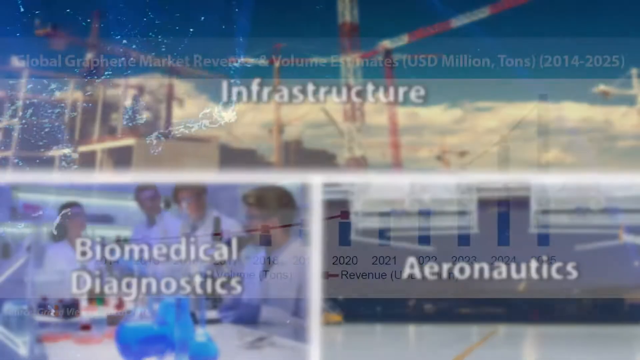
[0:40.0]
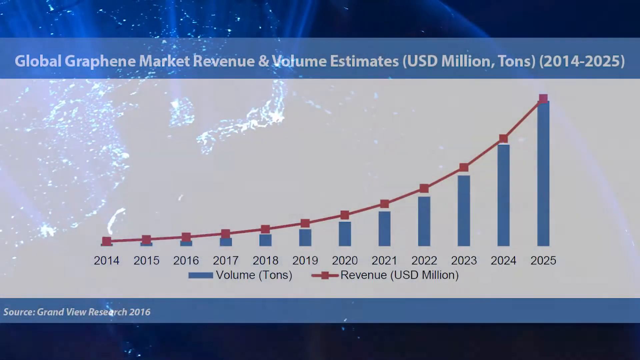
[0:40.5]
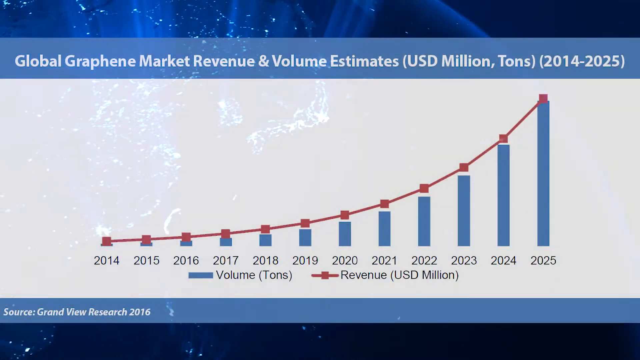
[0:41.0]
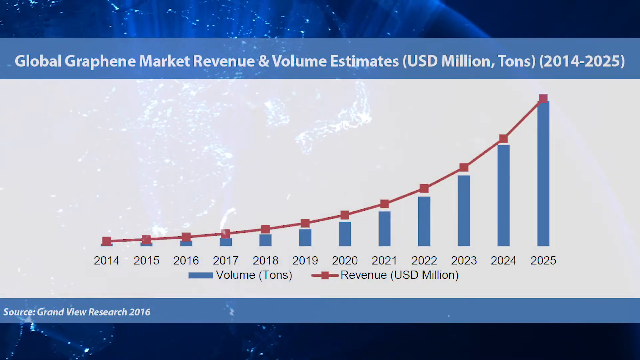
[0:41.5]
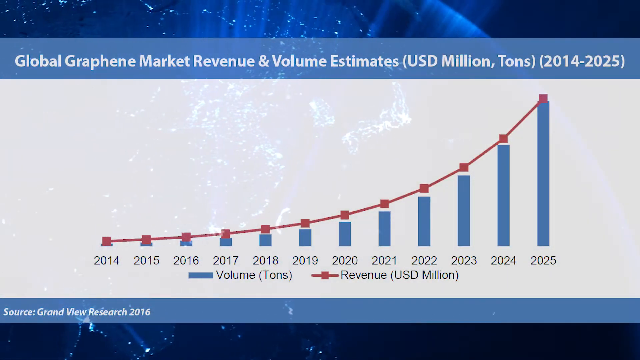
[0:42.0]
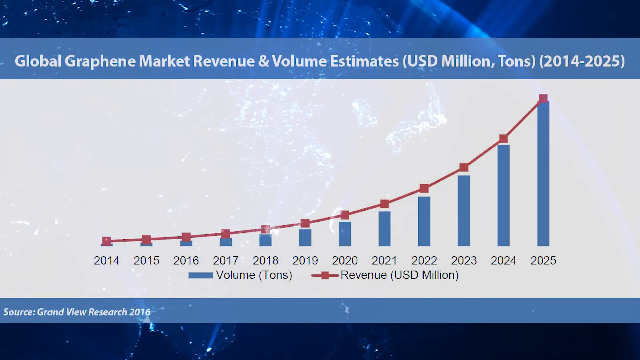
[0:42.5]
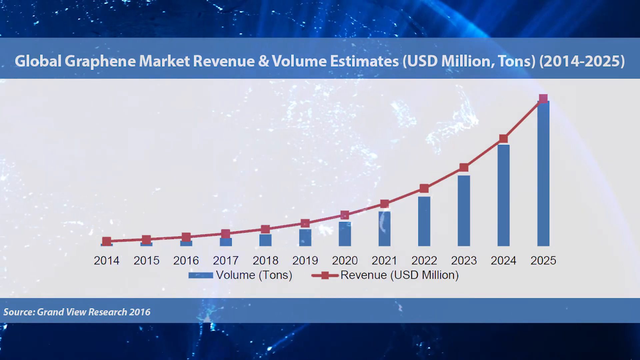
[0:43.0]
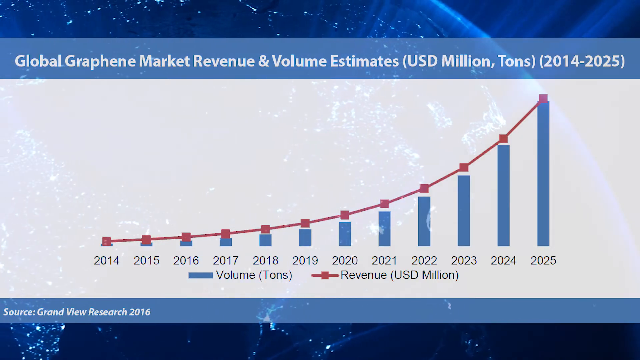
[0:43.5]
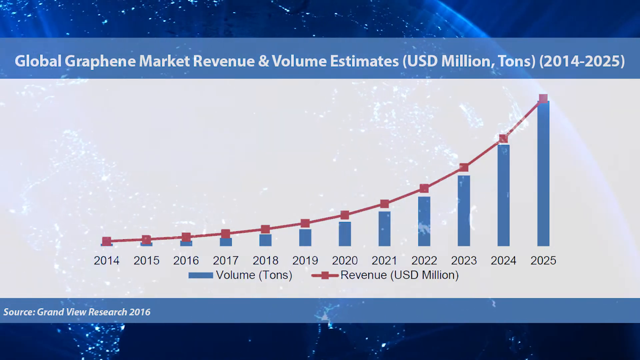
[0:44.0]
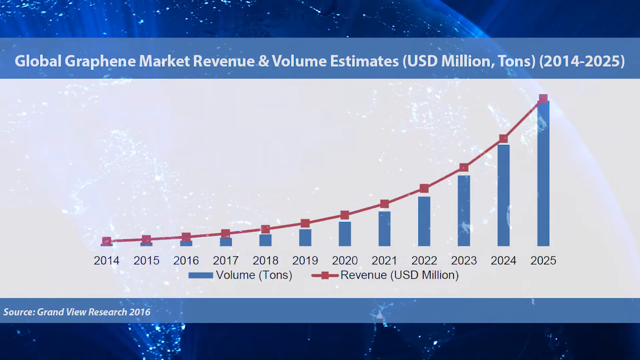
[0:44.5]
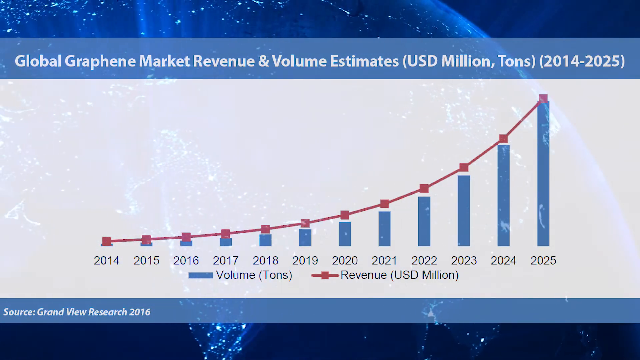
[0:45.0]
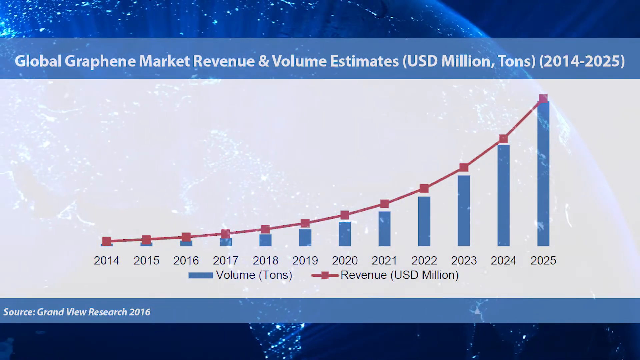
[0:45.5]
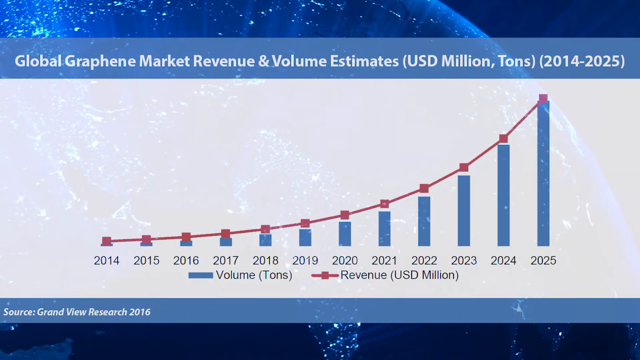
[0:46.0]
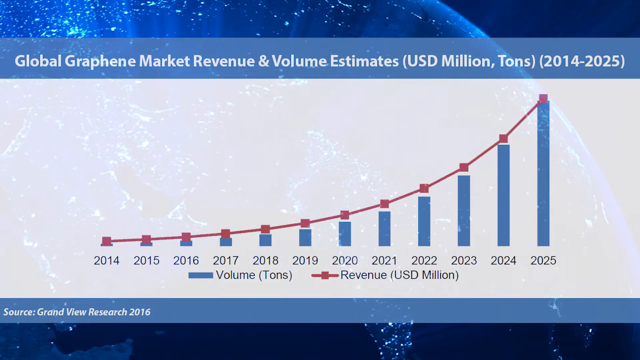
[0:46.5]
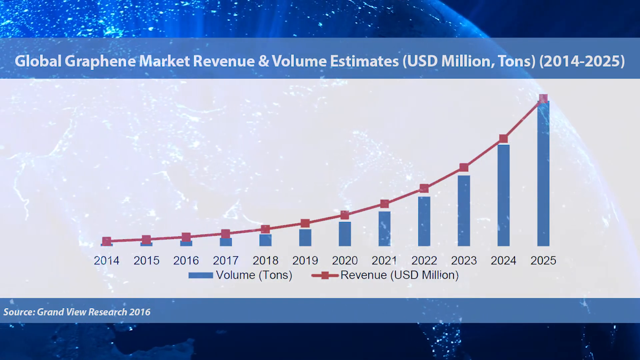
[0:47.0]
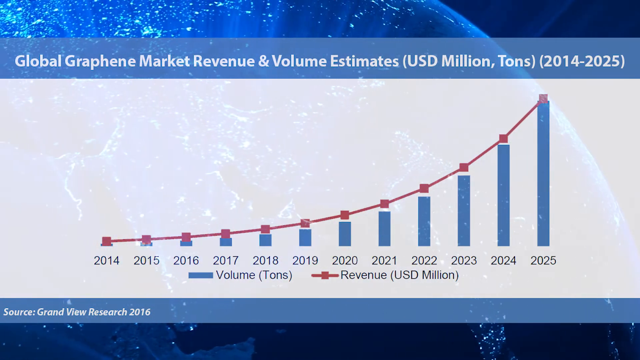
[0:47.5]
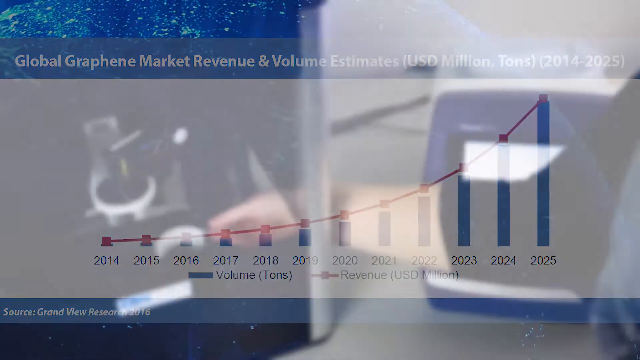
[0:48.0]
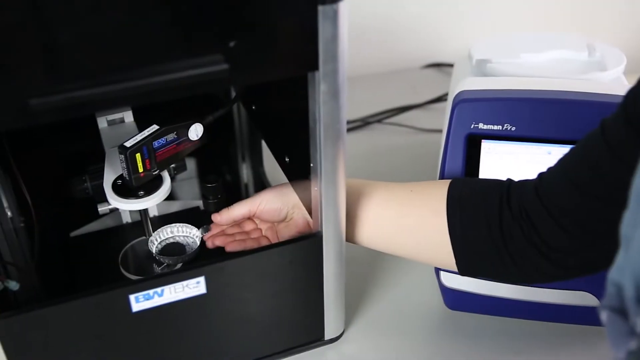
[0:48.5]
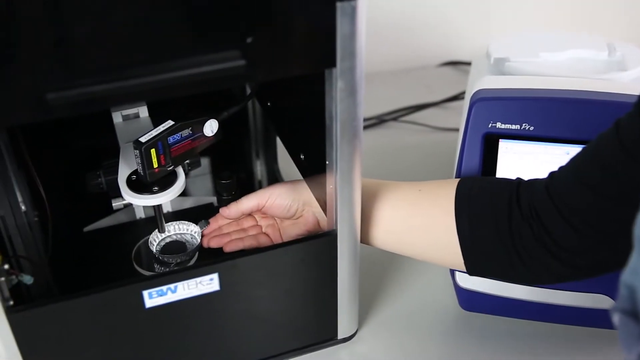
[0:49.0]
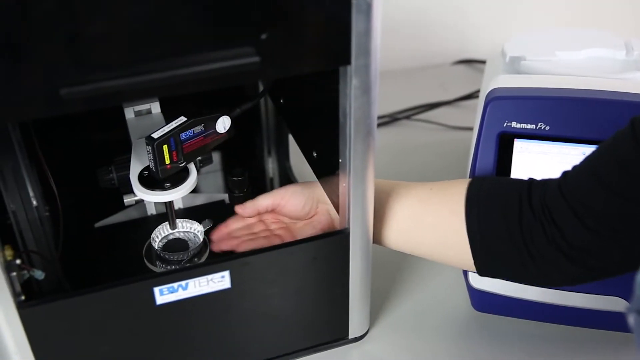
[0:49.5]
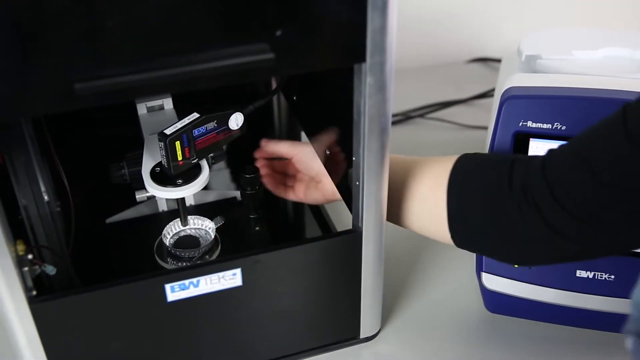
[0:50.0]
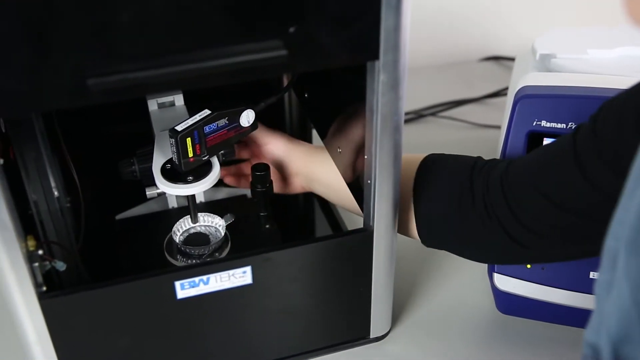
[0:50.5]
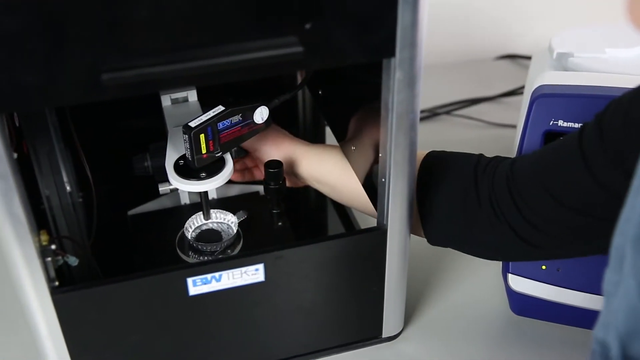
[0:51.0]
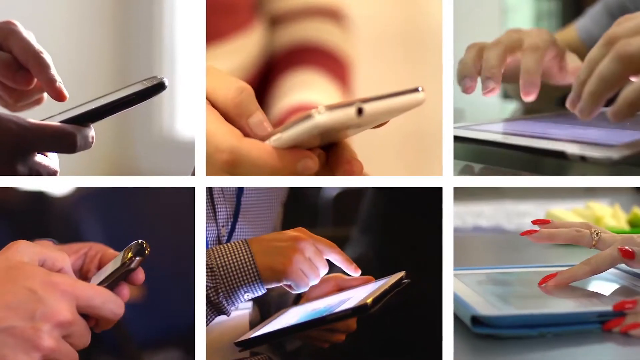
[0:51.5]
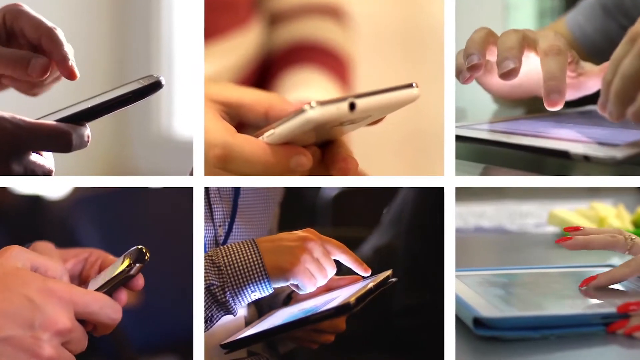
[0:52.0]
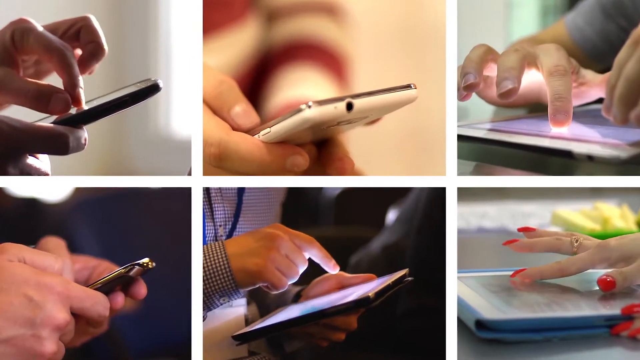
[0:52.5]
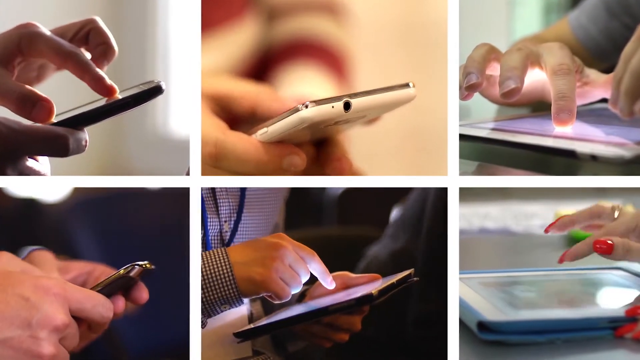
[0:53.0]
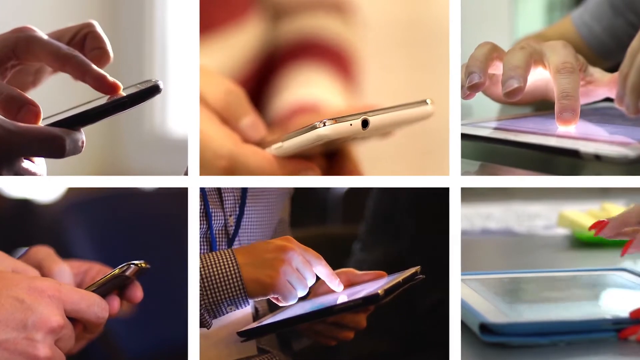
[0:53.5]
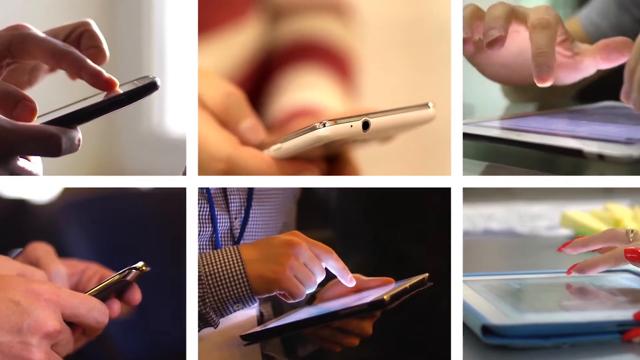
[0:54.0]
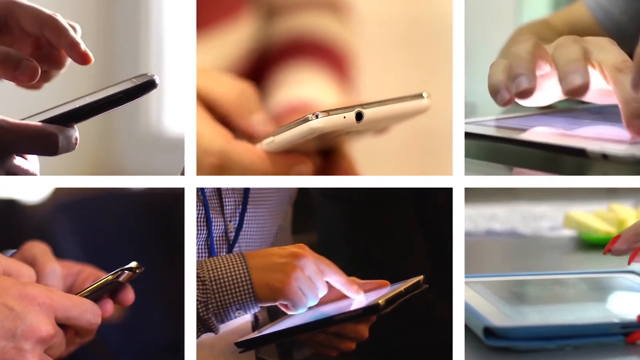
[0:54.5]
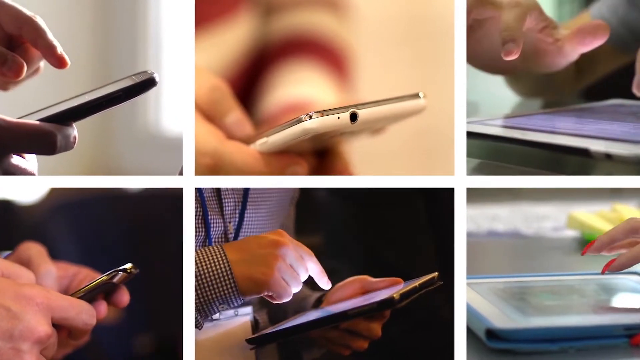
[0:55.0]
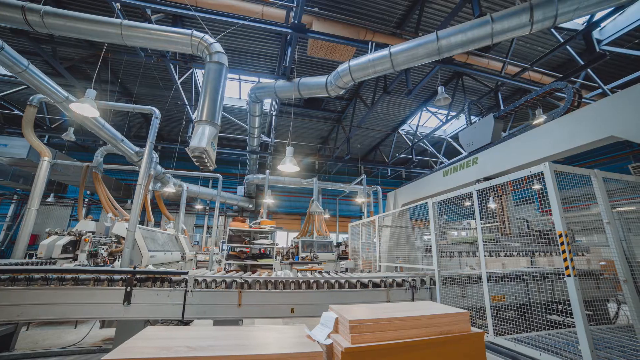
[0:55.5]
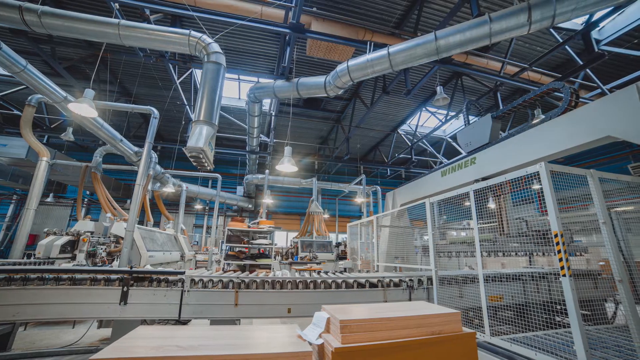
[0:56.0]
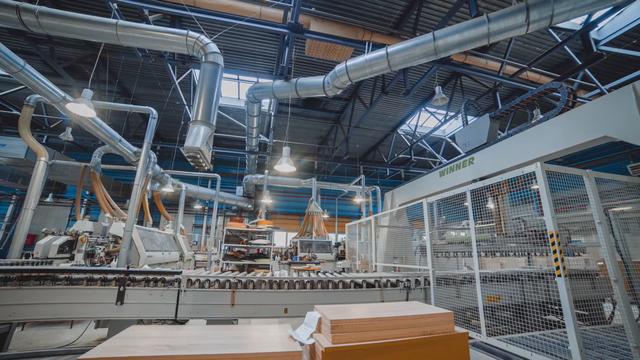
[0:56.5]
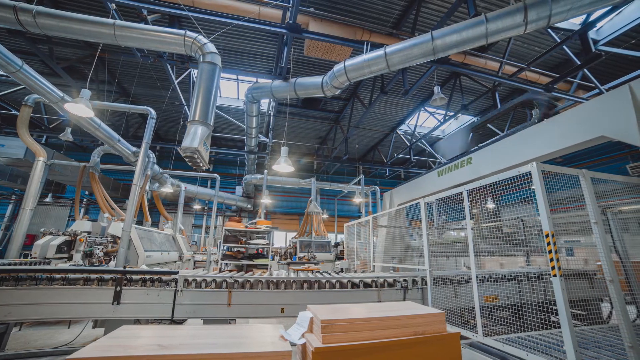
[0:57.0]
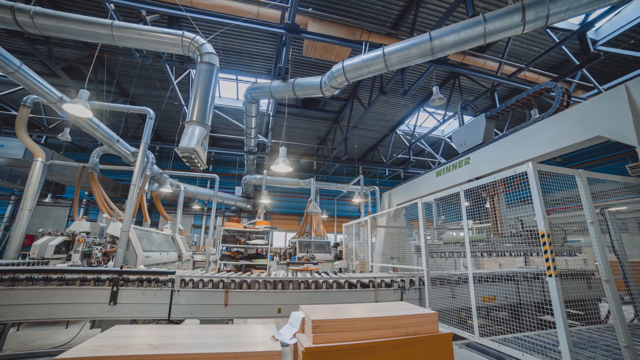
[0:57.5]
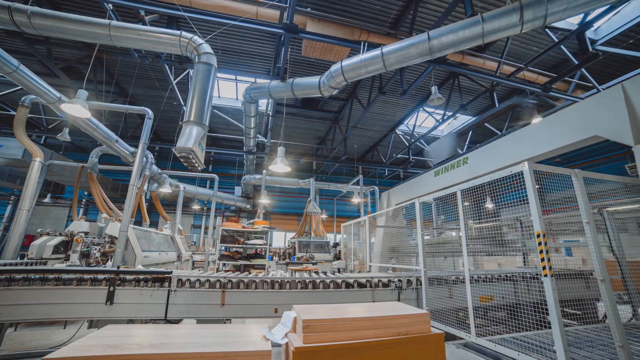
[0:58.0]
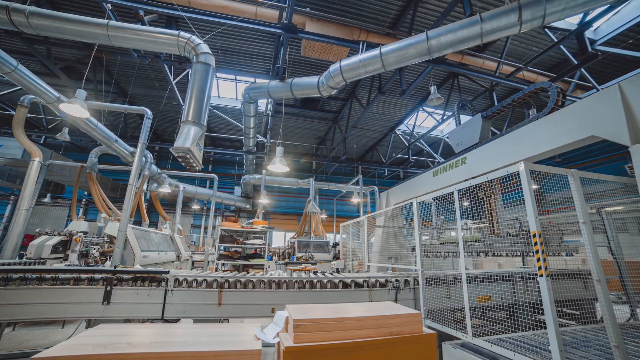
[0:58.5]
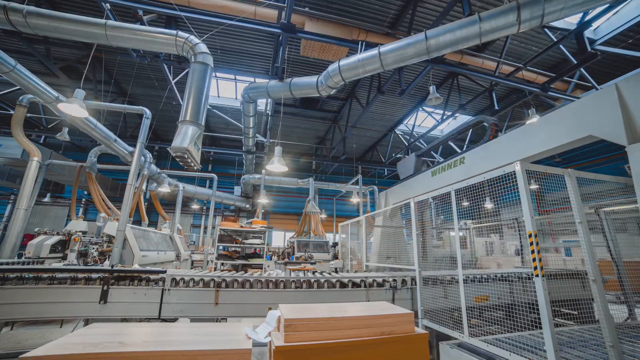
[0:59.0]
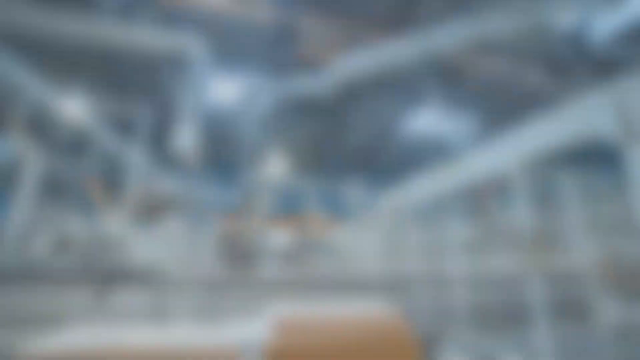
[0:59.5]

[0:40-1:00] A data chart covers 2014 to 2025. A red line represents revenue and blue bars represent volume, which continue to increase all the way to 2025, and the line curves upward to the right. The chart is titled "global graphene market revenue and volume estimates, USD million, tons", and the background shows a moving blue light effect. Next, a person's hand places a very small open cup shape under a machine. Then six screens show different people using their cell phones, zoomed in closely on their hands and phones. After that comes what looks like the inside of a machine shop, with a cage in the background and what appears to be a conveyor belt, rapidly showing how the machine works and moves.